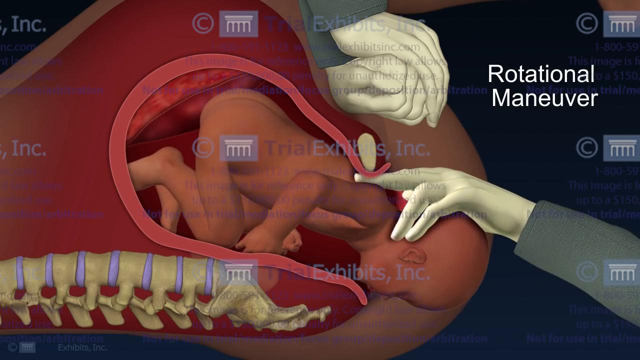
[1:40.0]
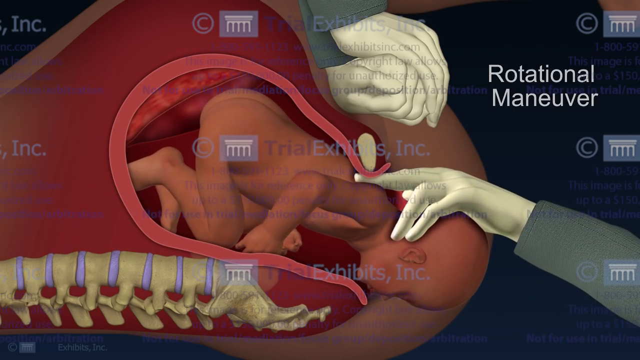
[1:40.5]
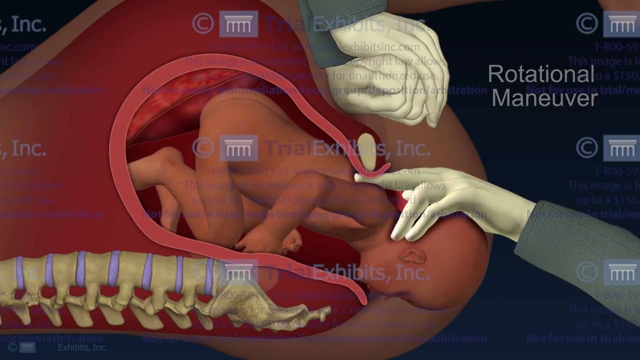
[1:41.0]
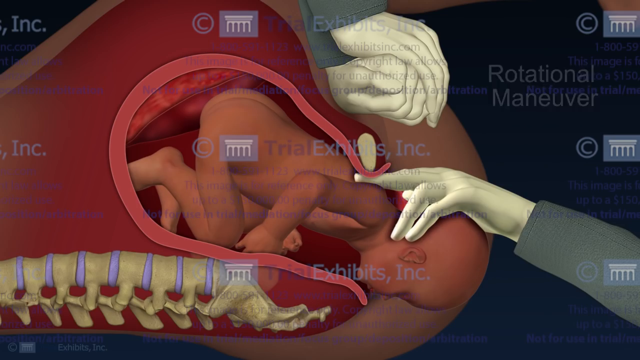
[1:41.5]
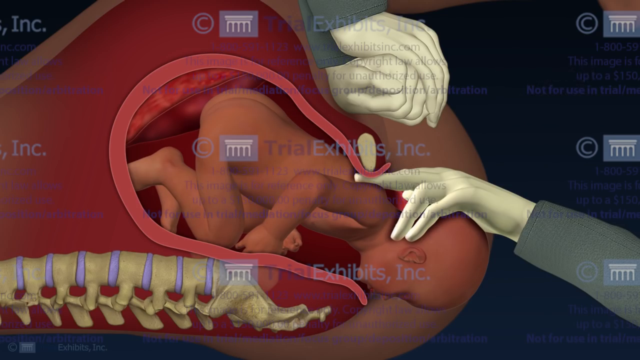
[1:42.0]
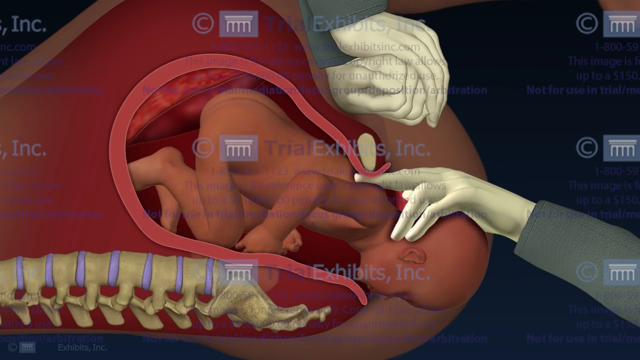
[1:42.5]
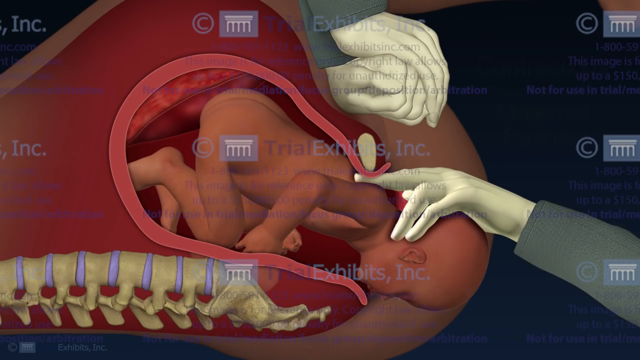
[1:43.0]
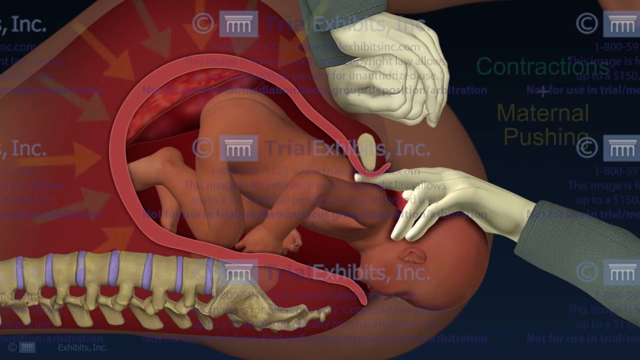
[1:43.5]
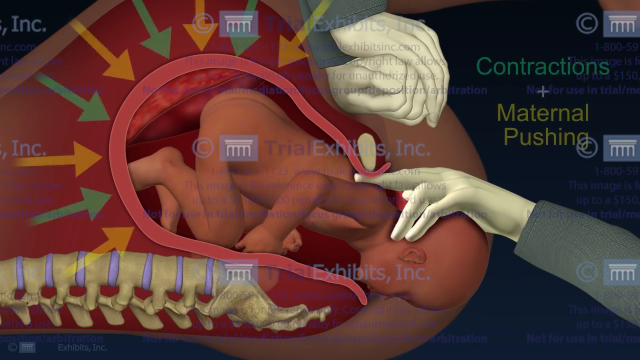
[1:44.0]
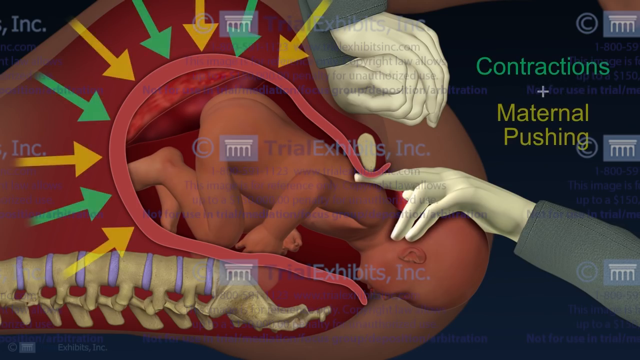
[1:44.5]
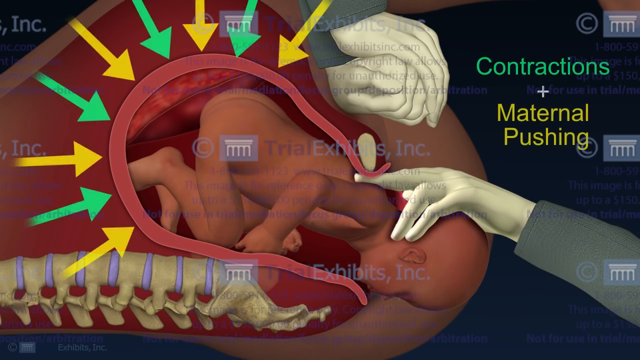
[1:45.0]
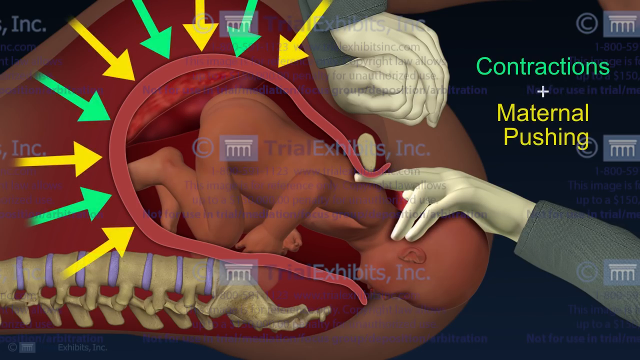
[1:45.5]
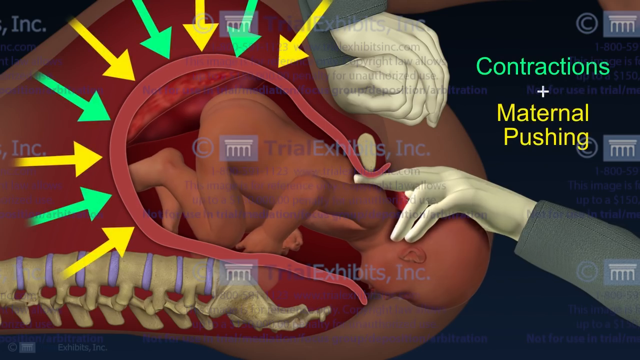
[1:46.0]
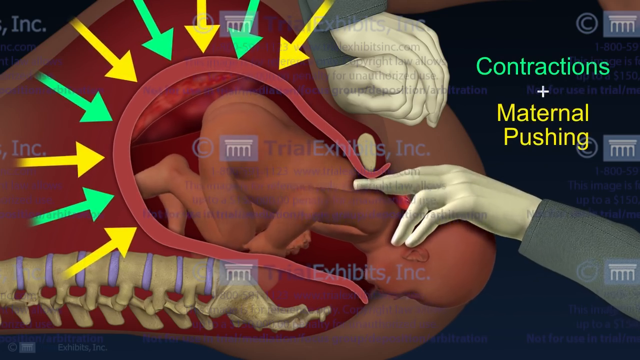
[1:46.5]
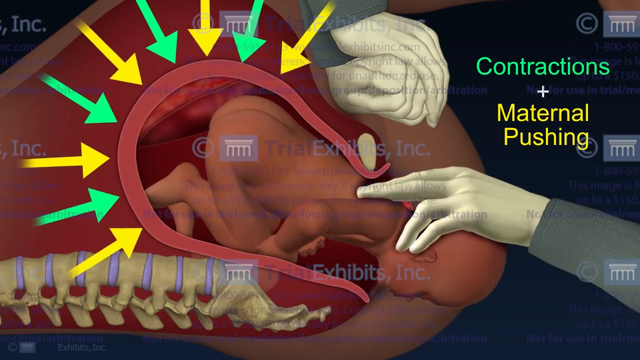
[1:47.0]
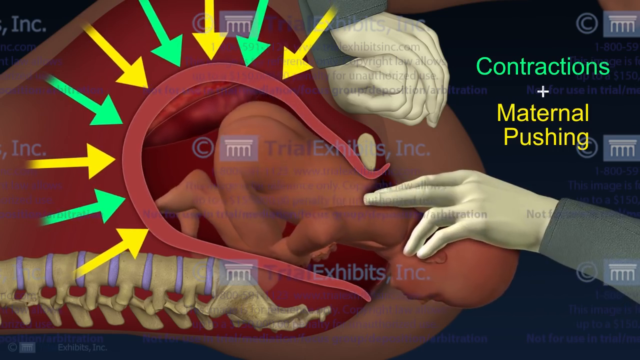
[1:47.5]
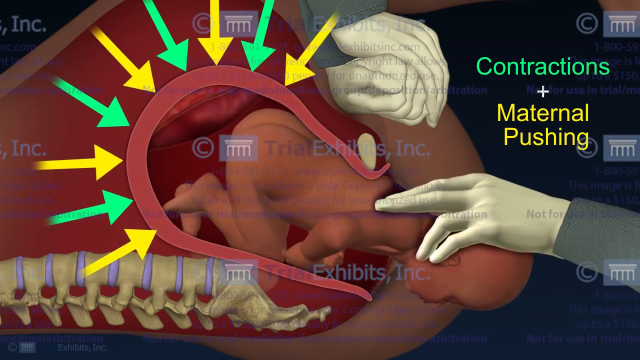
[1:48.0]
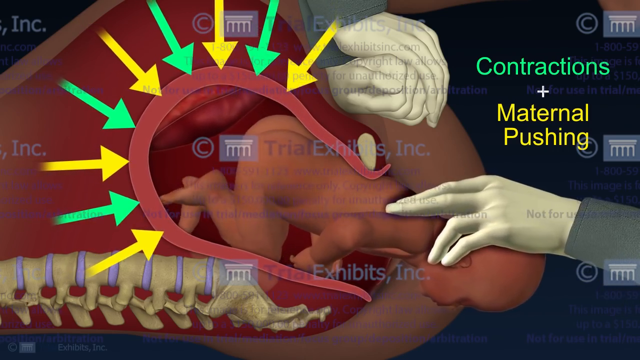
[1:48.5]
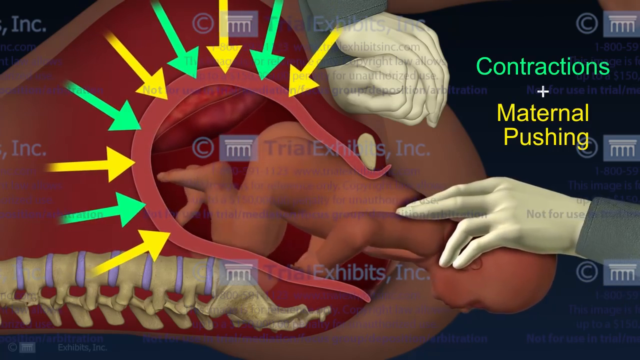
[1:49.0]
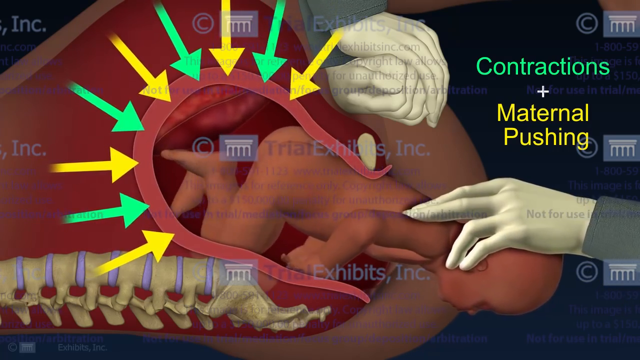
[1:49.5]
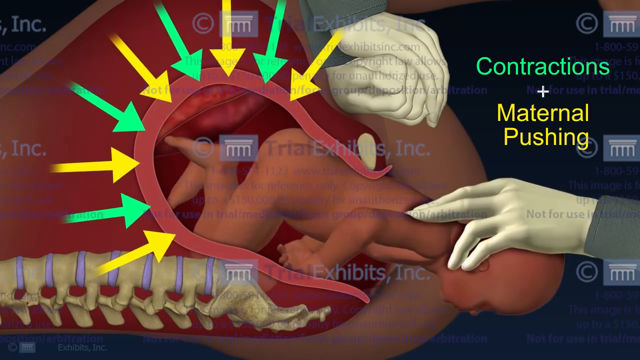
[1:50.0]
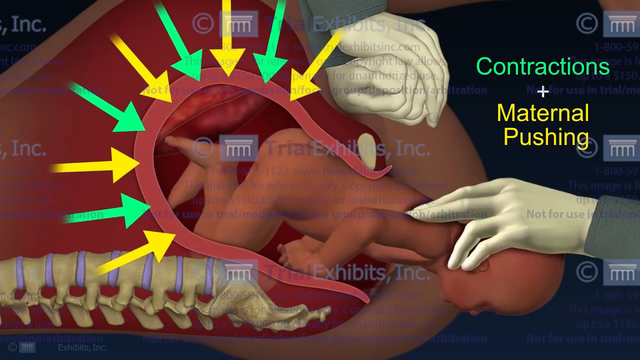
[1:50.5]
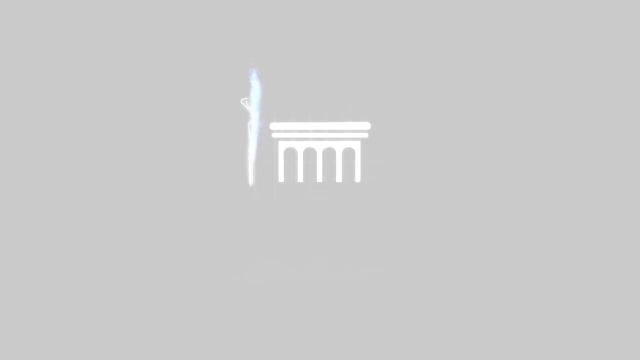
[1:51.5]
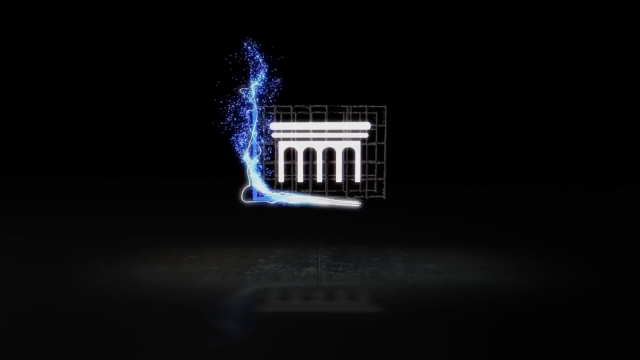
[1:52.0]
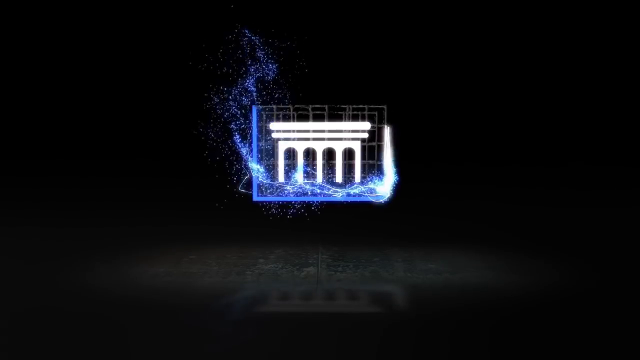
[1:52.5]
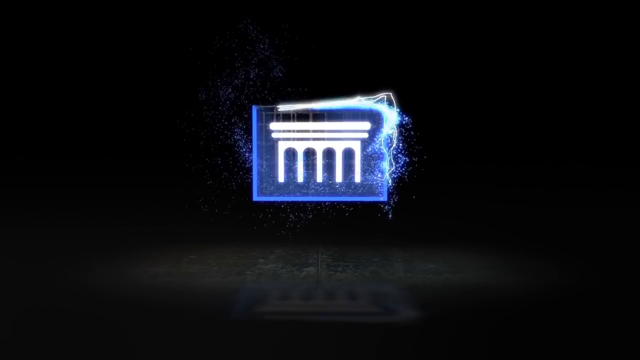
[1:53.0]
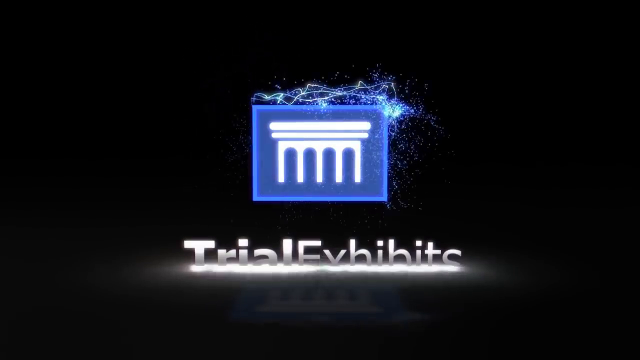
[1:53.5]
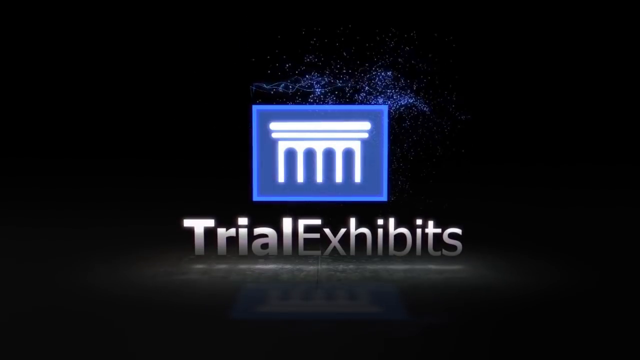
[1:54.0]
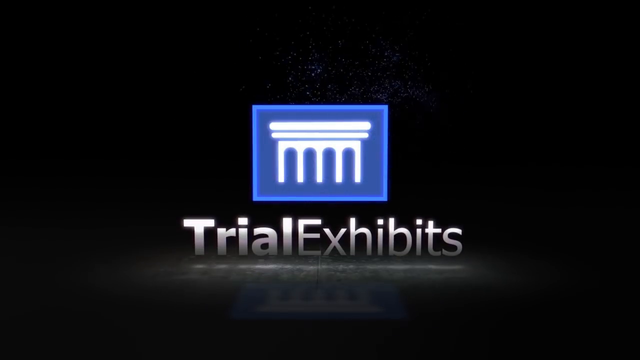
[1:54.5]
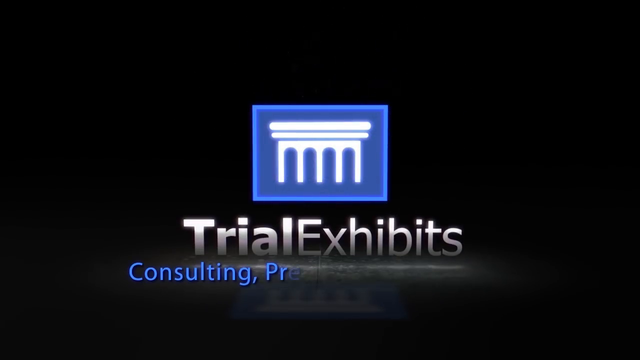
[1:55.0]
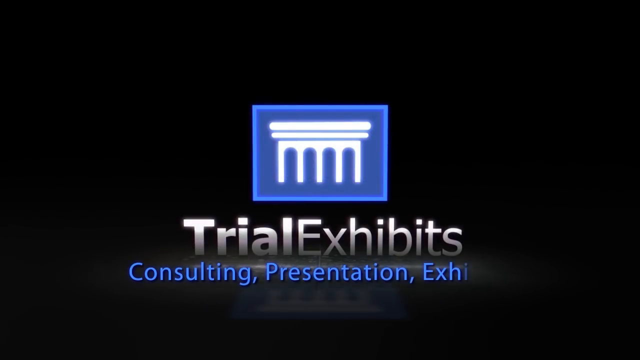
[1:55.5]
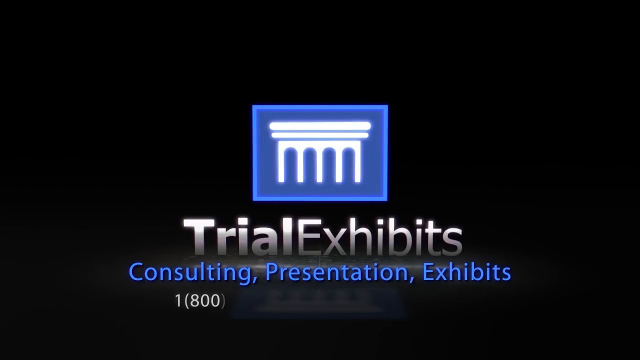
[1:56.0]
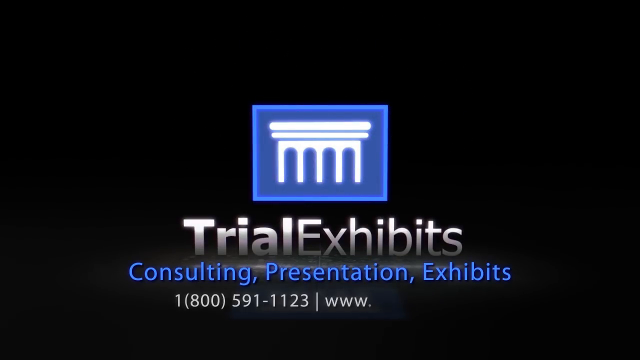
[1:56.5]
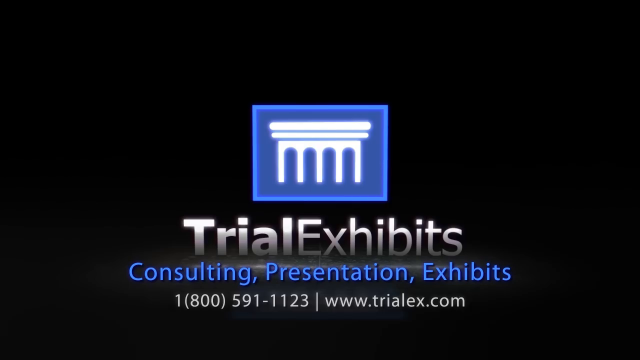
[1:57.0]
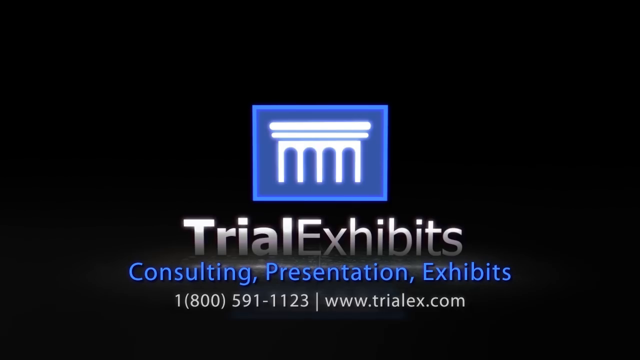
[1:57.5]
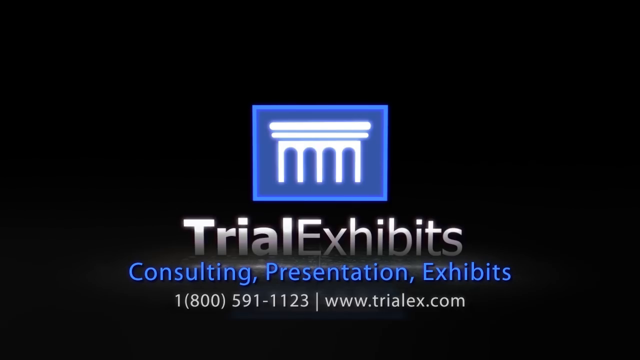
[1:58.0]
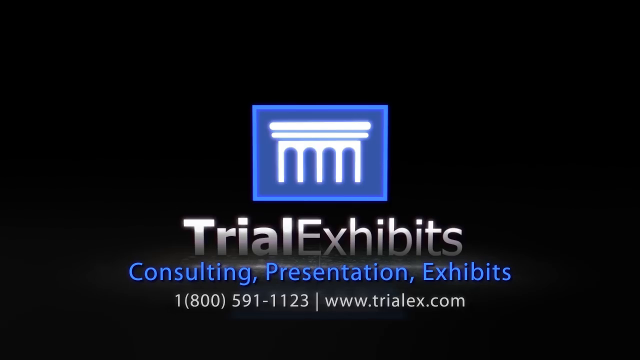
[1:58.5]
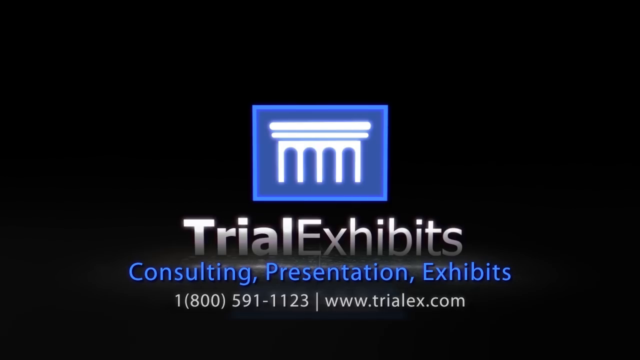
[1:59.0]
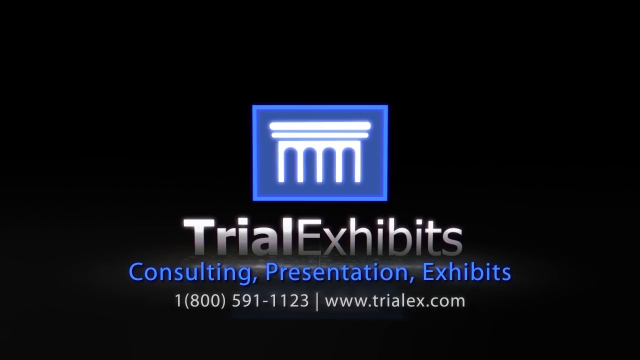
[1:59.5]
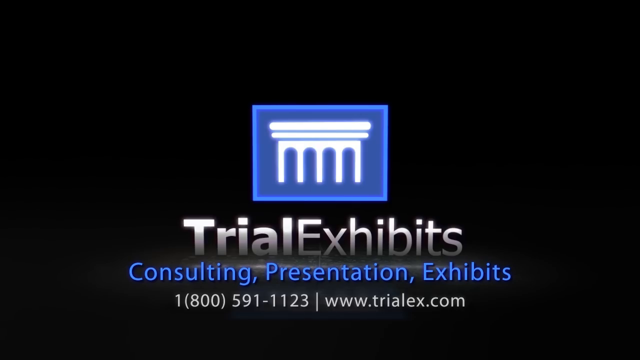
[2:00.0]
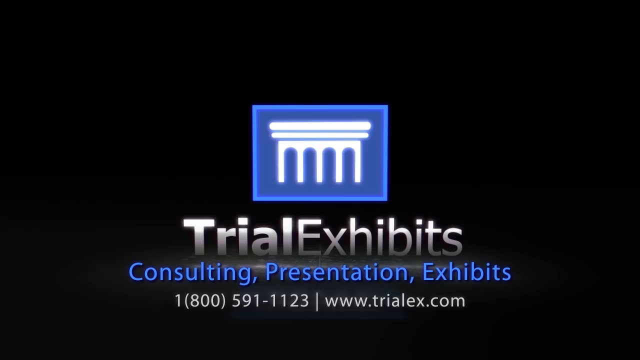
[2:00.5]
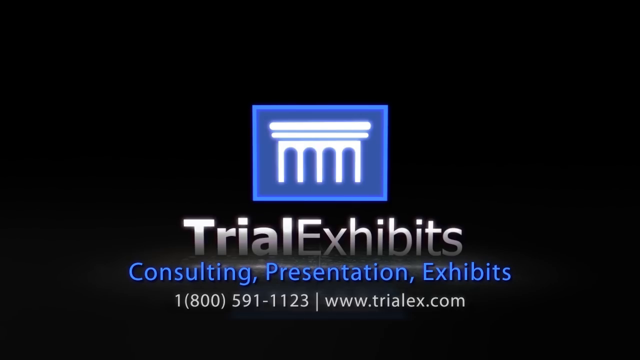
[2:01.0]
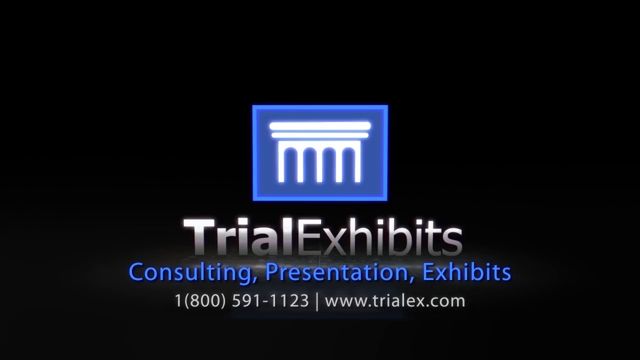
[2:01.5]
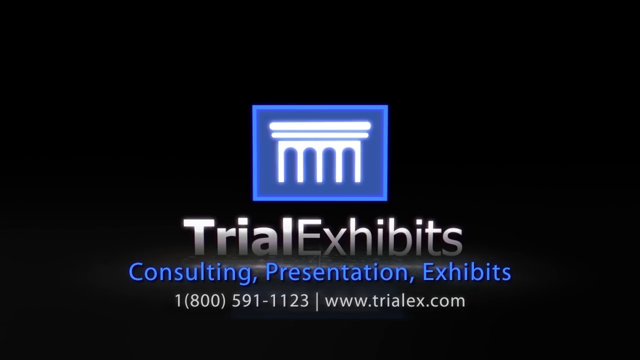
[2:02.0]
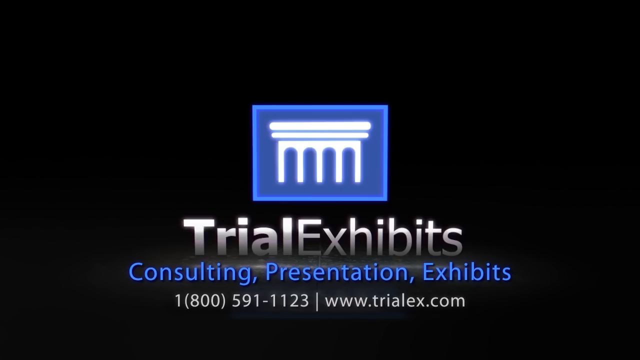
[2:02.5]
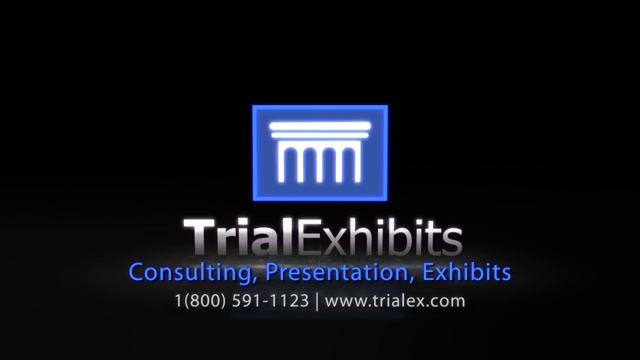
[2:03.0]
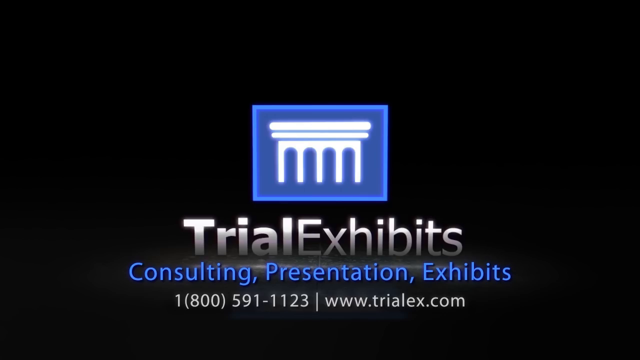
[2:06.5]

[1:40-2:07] In the rotational maneuver, one person's hand is on top while another is at the baby's back, pushing down with what almost looks like the index finger, maybe two fingers. The animation moves to a phase involving maternal pushing, with two sets of hands, one pushing down and the other pulling. The arrows appear, and the person using two fingers holds the middle and index fingers together, pushing down on the shoulder blades while using the other fingers to pull. As they pull, the baby starts to come through a little more. The video then returns to the graphic of the Congress-like building: a simple image with about five pillars, a little blue spray-paint-like effect or water droplets around it, and "Trial Exhibits" underneath, all on a plain black background. A shiny white effect looks like light coming from the top and shining down. Below "Trial Exhibits," blue text reads "consulting presentation exhibits," followed by a phone number, 1-800-591-1123, and a website address.